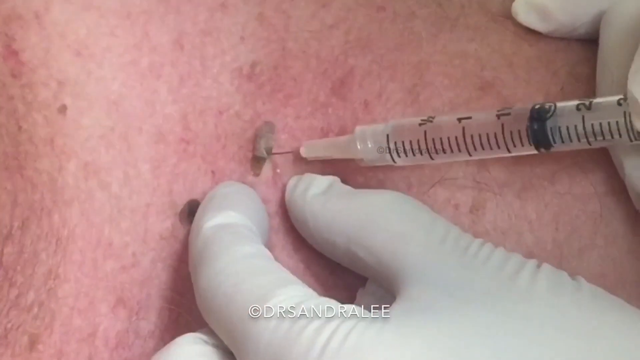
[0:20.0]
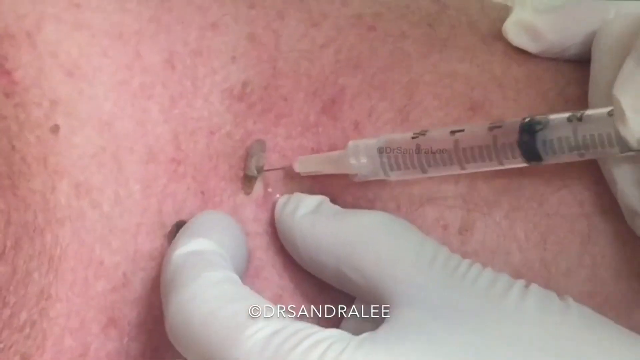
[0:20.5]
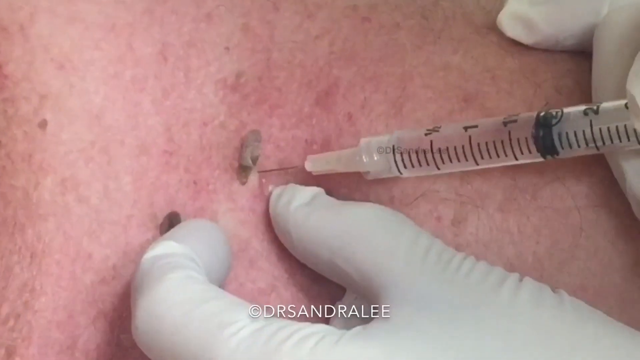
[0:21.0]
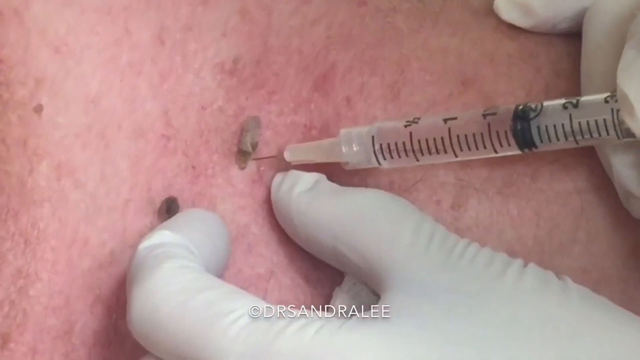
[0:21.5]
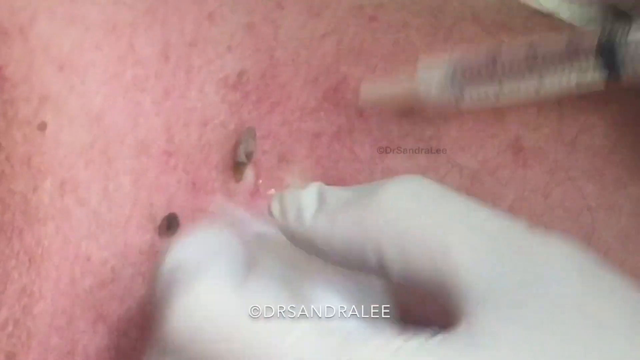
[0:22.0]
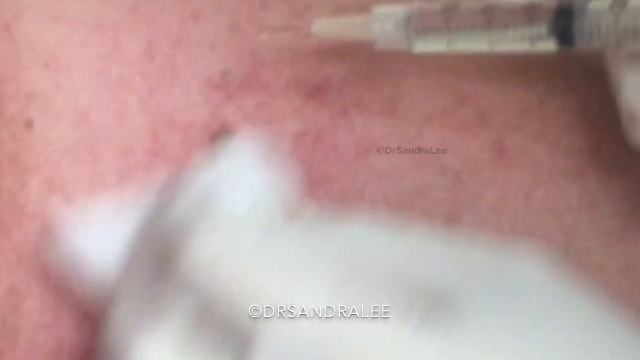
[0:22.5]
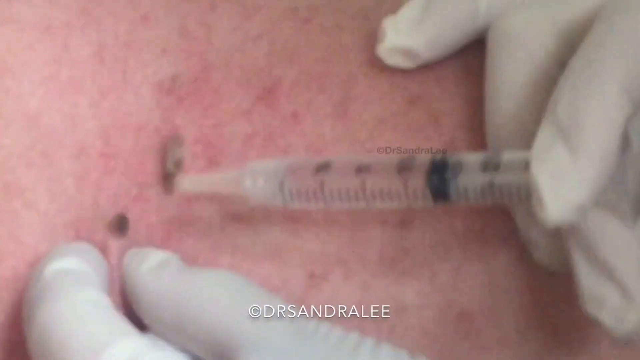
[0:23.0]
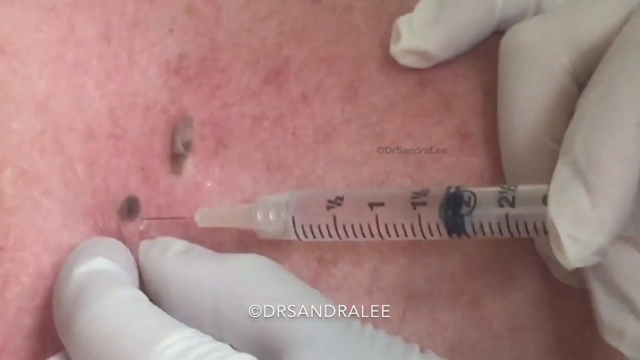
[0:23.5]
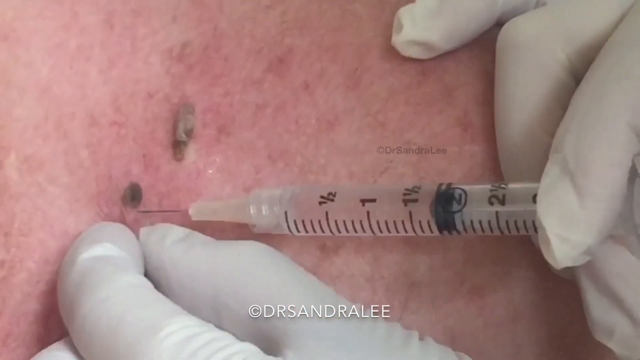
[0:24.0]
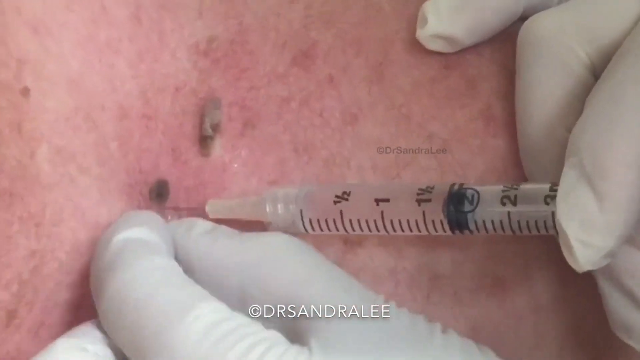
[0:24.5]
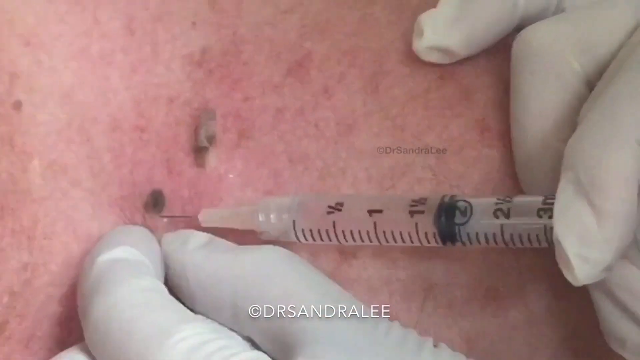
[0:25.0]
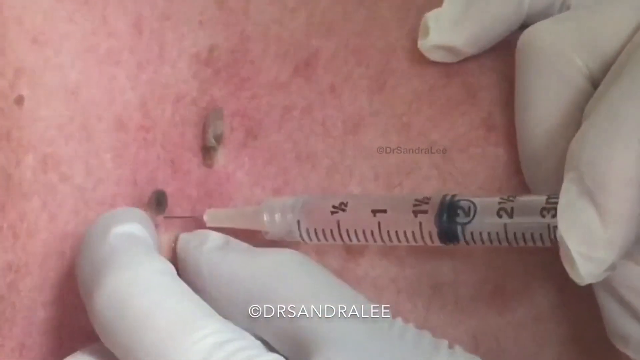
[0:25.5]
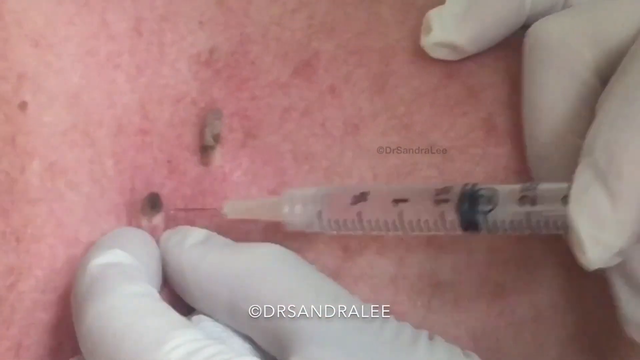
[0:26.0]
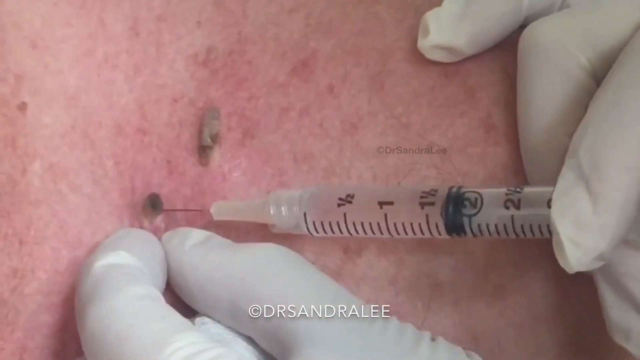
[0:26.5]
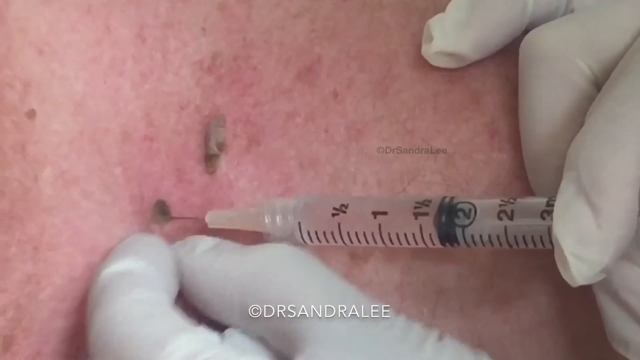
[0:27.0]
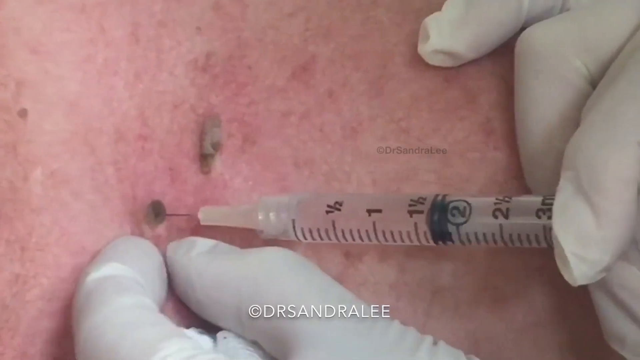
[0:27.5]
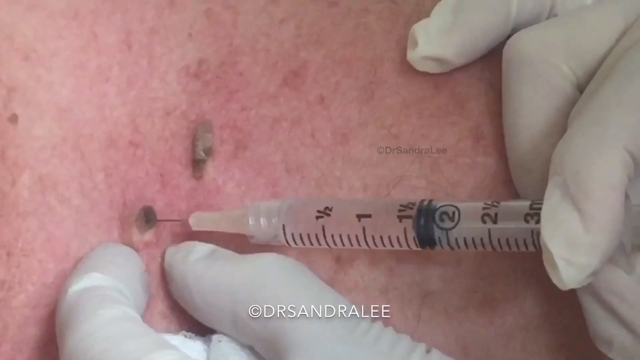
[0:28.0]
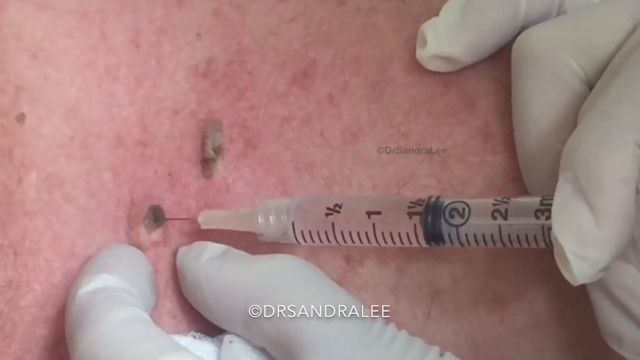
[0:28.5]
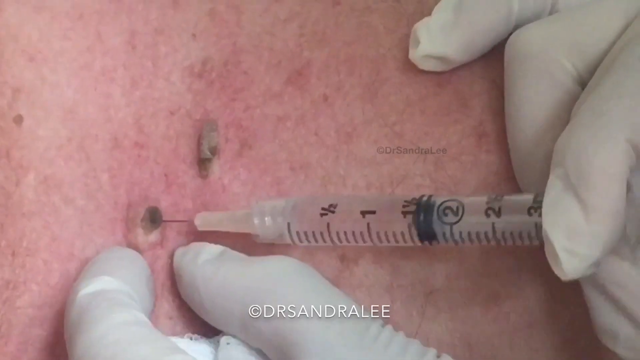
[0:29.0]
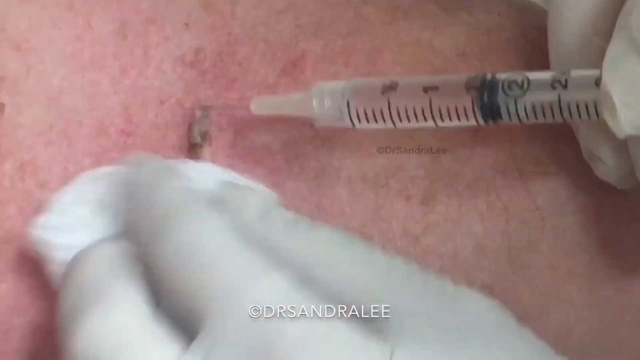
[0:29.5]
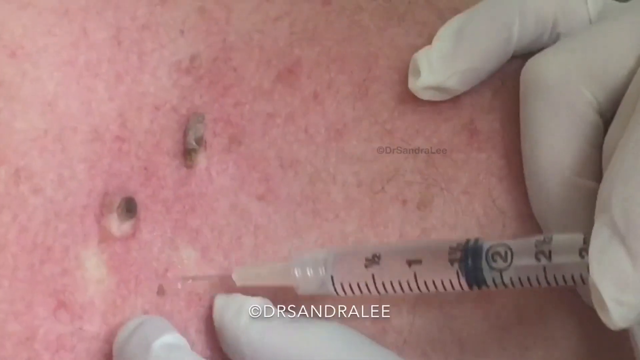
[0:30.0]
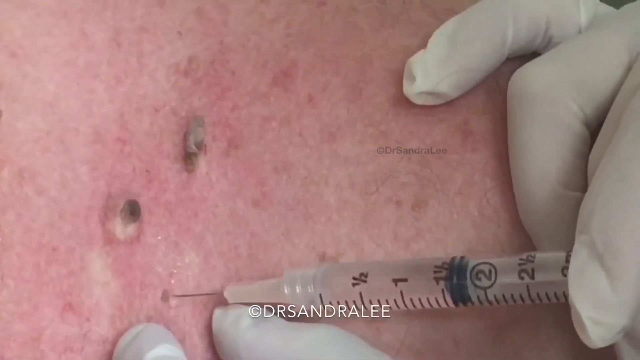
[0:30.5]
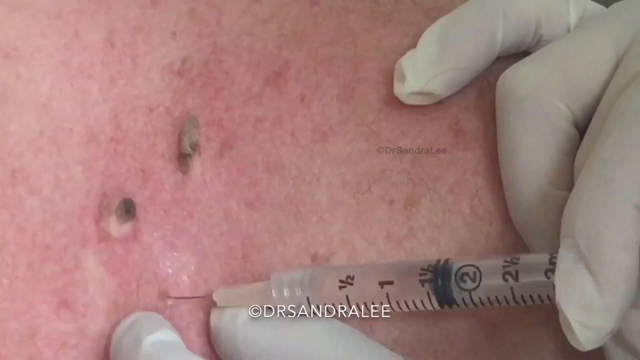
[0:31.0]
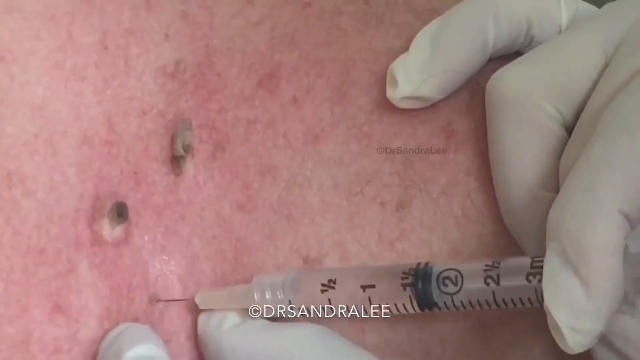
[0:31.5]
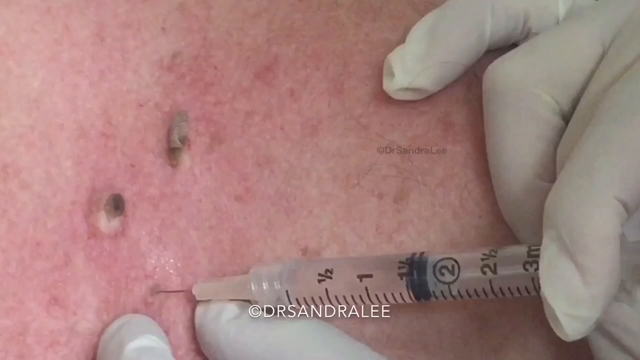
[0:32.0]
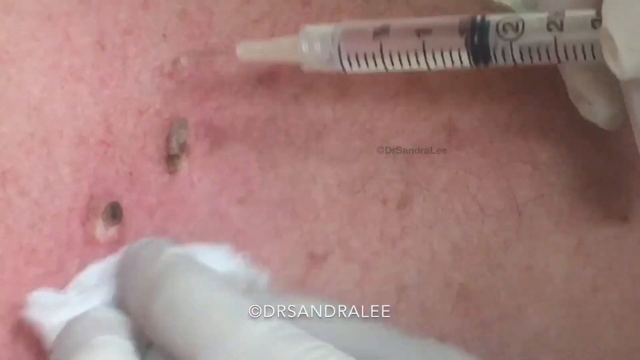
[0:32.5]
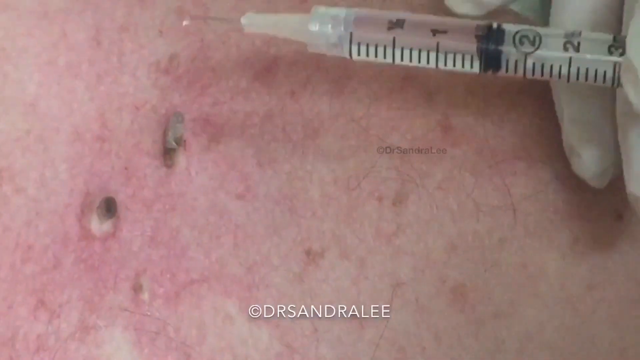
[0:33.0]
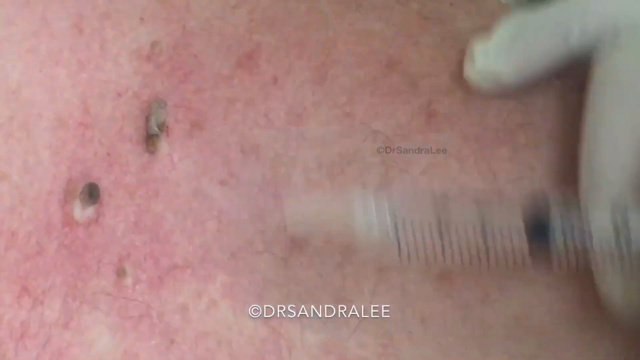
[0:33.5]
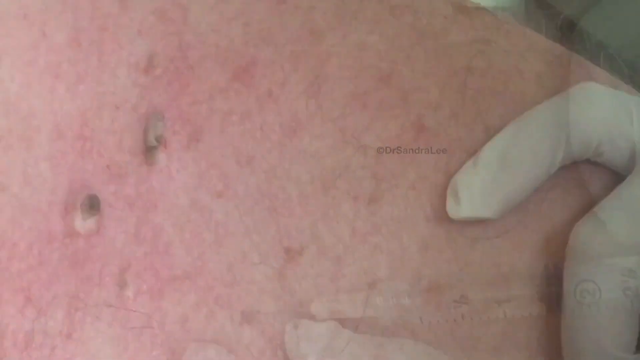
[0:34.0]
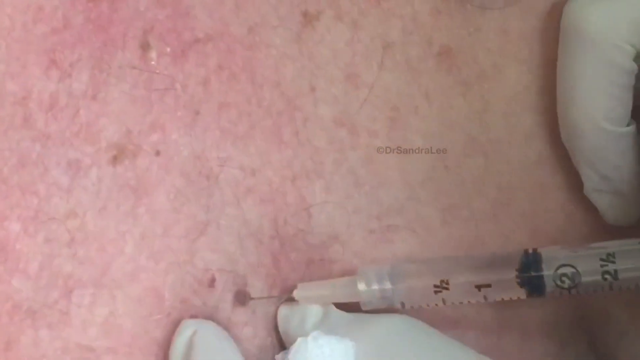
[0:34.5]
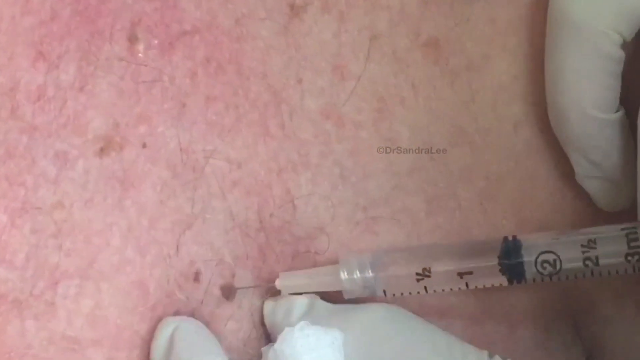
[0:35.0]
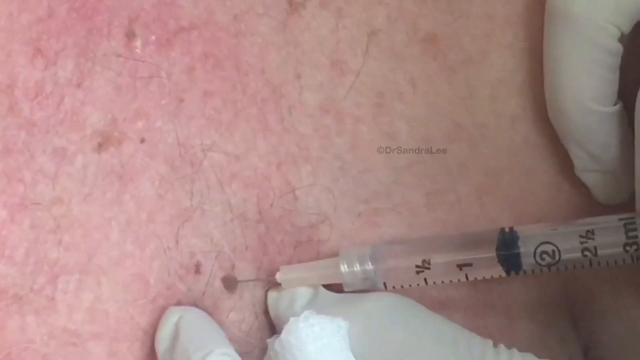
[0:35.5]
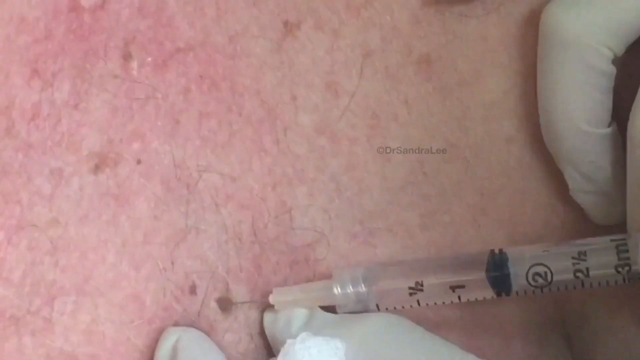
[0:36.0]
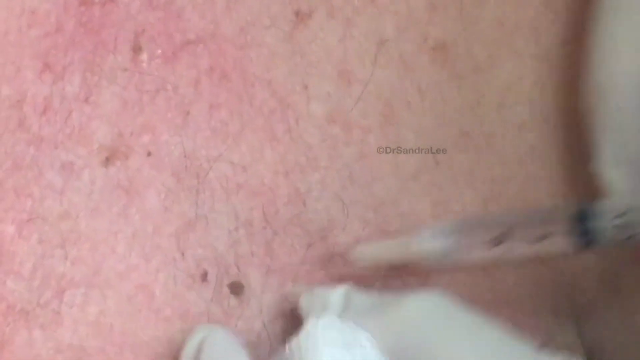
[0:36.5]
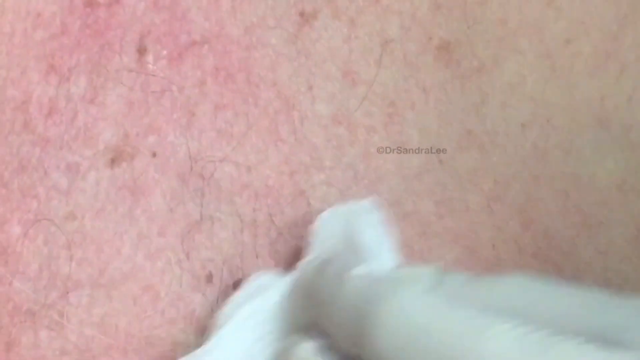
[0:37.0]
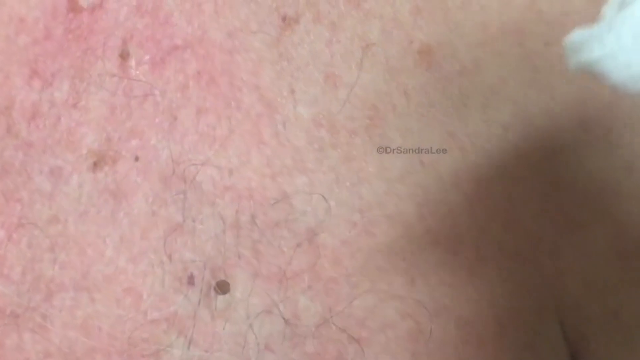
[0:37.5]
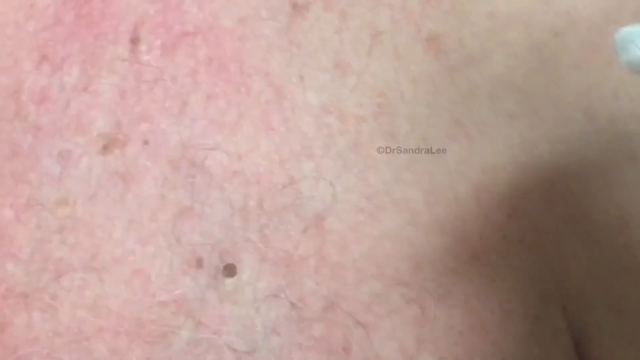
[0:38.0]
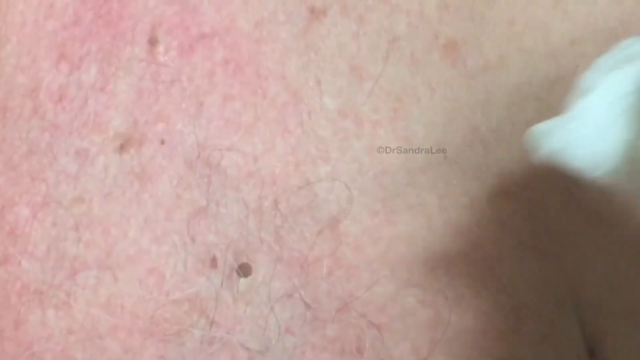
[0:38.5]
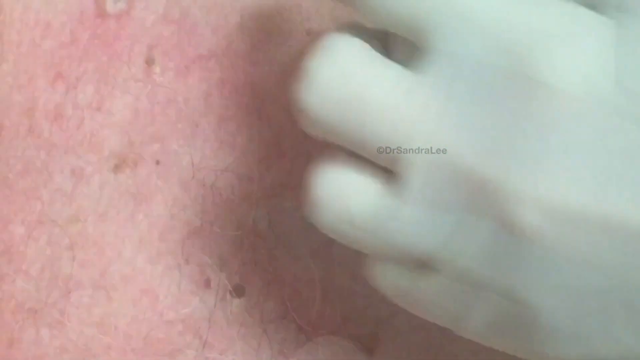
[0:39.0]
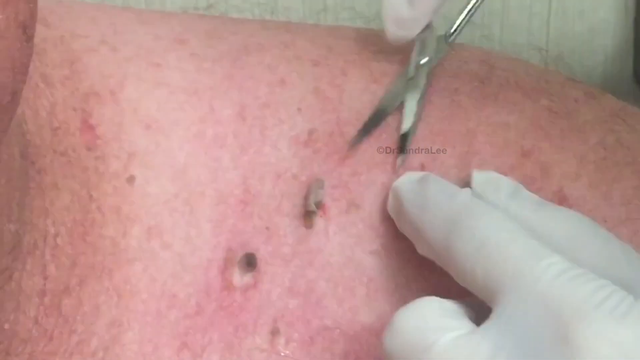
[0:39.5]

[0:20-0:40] A doctor's hands in white gloves work on someone's skin with a syringe containing liquid up to about 2 on the guide on its side. There is a brown or gray tag on the skin, and text at the bottom reads "Dr. Sandra Lee." The doctor pokes the syringe into the skin at the base of the mole or skin tag and injects a small amount of liquid, periodically wiping the liquid from the top of the skin. The doctor then moves to another dark spot that looks like a dark freckle and does the same, poking the needle just under the skin and injecting a little liquid, then finds a third freckle nearby and does the same. The video switches to another part of the skin, where the doctor again pokes the needle in and injects a little liquid, then wipes the area with a paper towel. The doctor is then seen holding a small pair of scissors in the right hand.